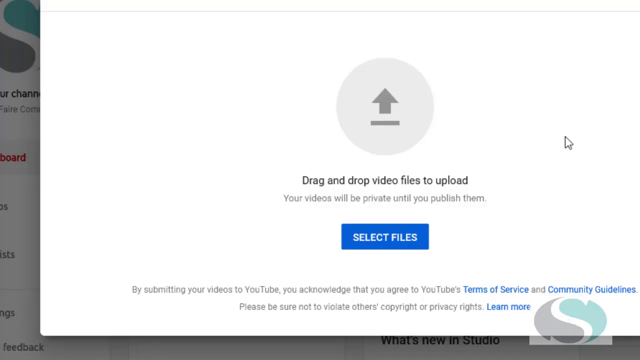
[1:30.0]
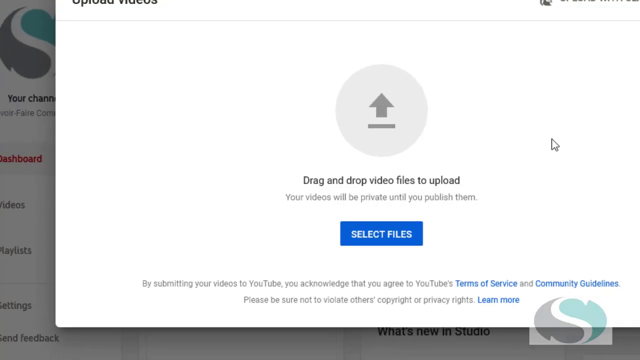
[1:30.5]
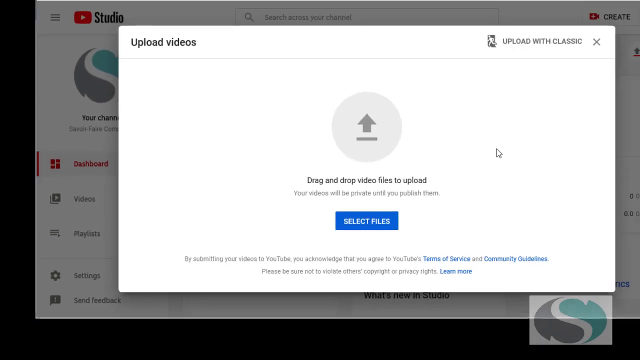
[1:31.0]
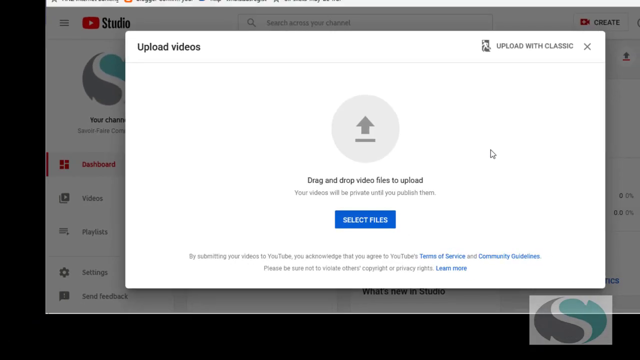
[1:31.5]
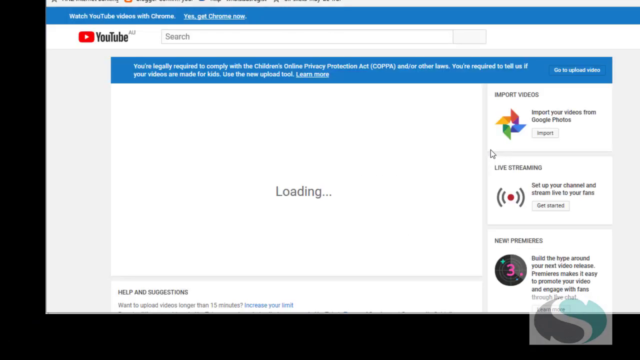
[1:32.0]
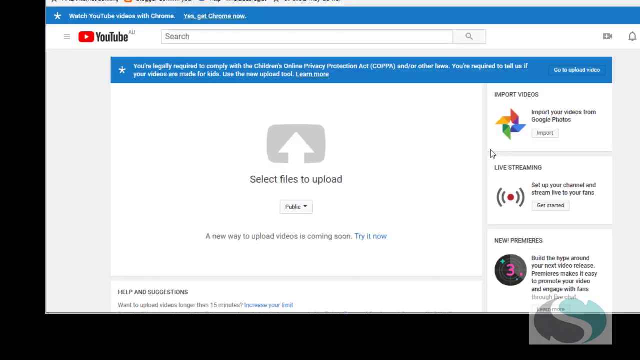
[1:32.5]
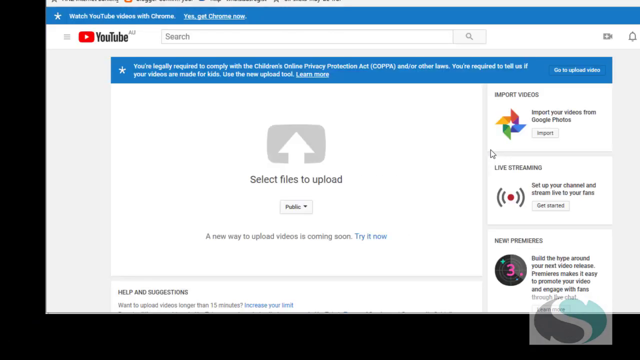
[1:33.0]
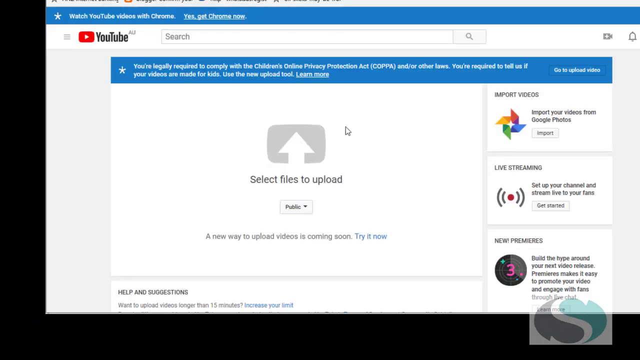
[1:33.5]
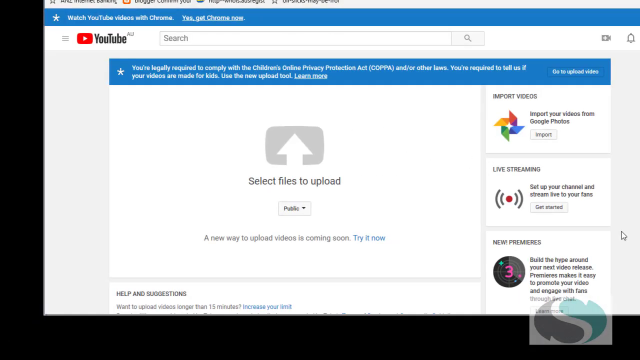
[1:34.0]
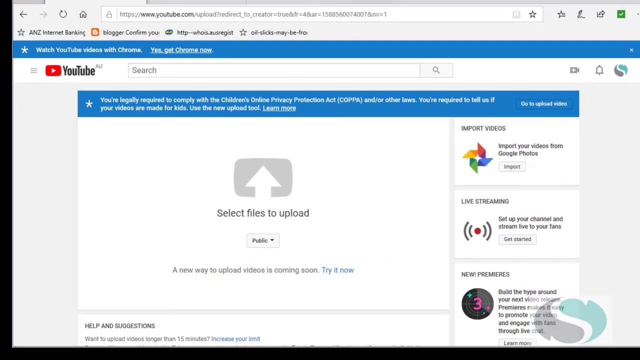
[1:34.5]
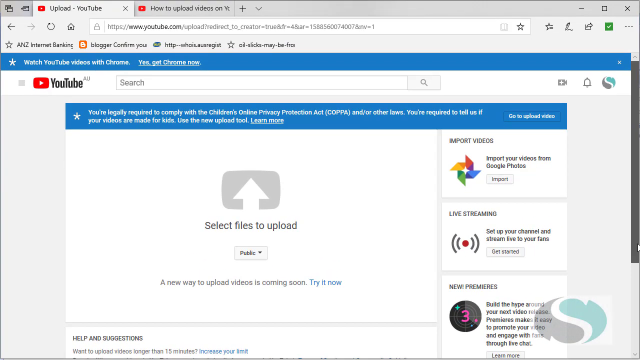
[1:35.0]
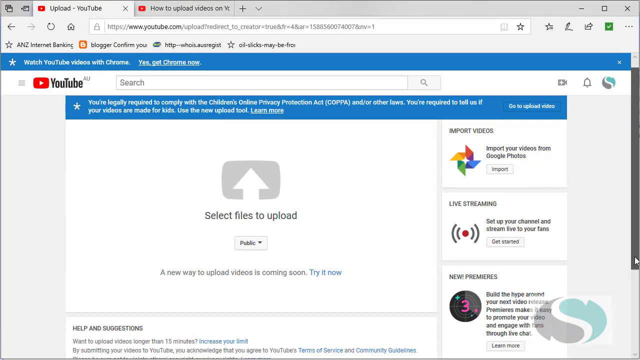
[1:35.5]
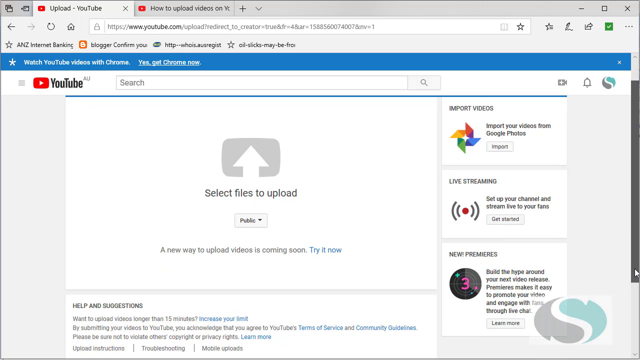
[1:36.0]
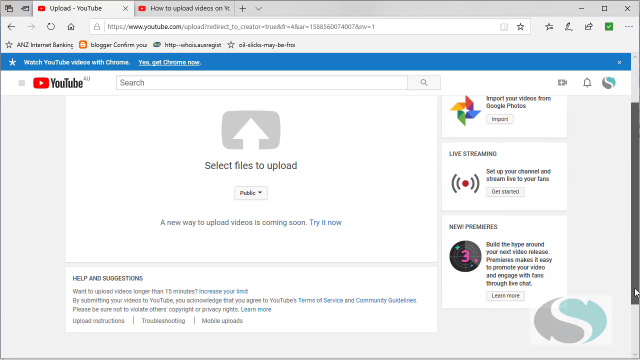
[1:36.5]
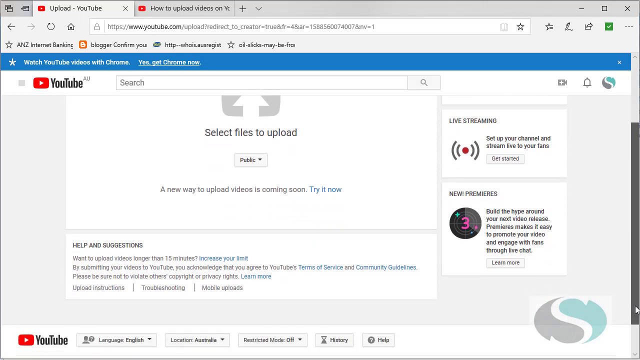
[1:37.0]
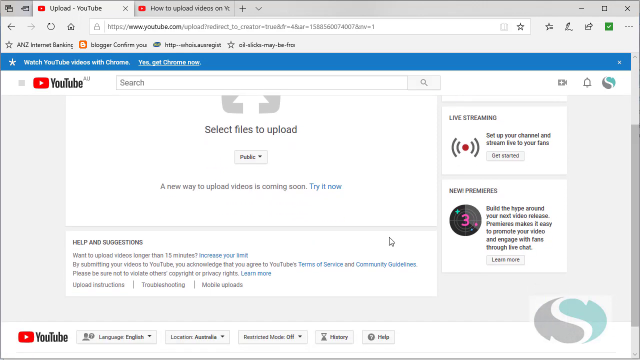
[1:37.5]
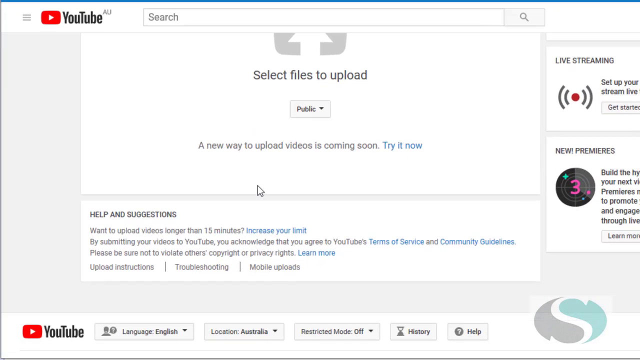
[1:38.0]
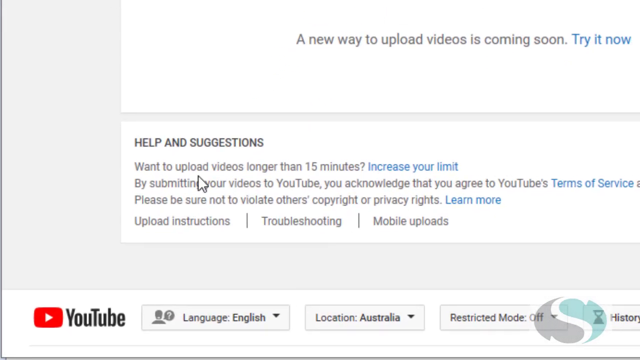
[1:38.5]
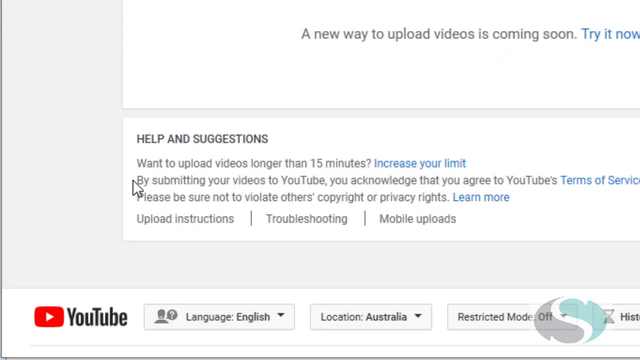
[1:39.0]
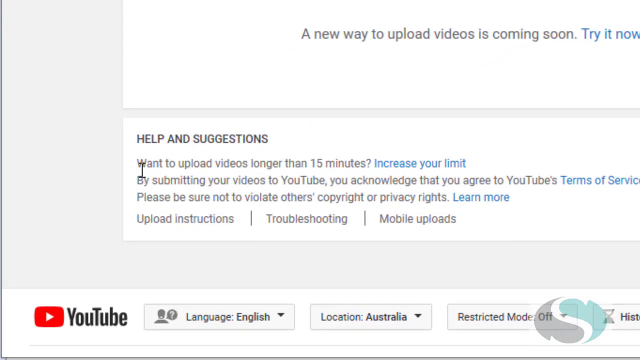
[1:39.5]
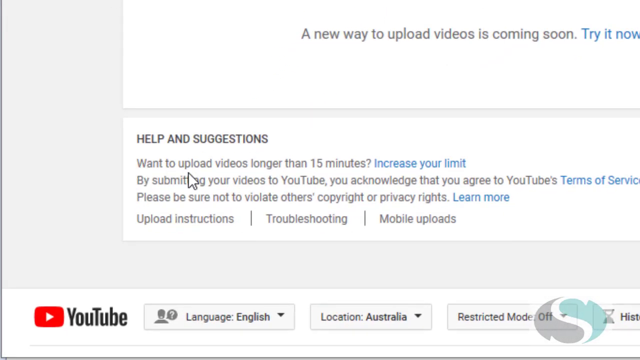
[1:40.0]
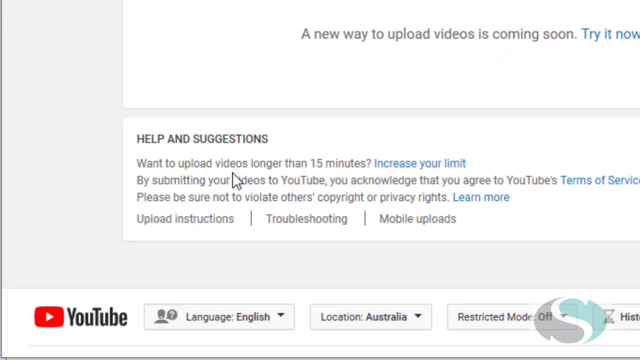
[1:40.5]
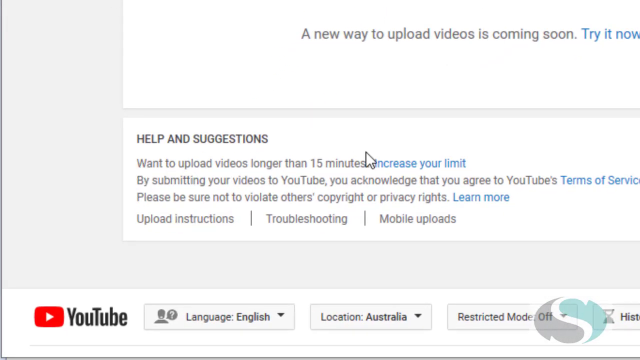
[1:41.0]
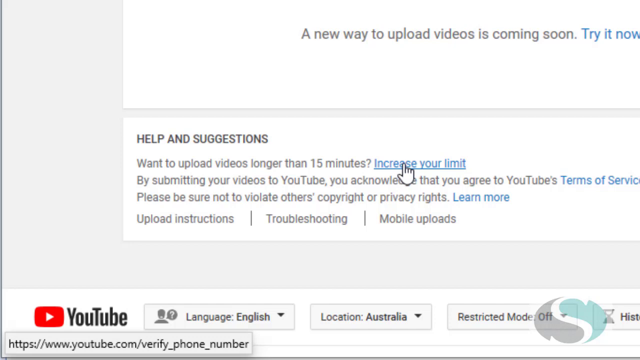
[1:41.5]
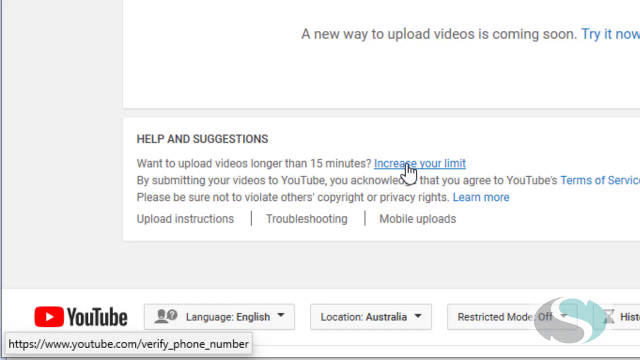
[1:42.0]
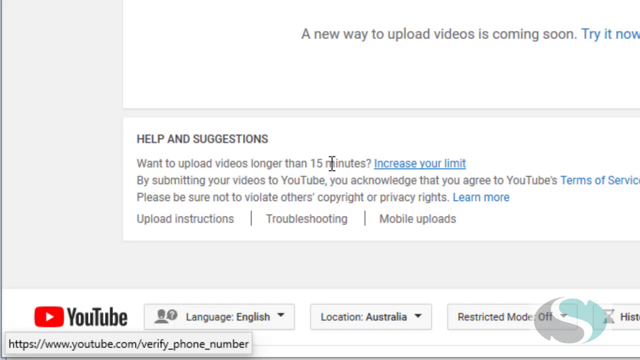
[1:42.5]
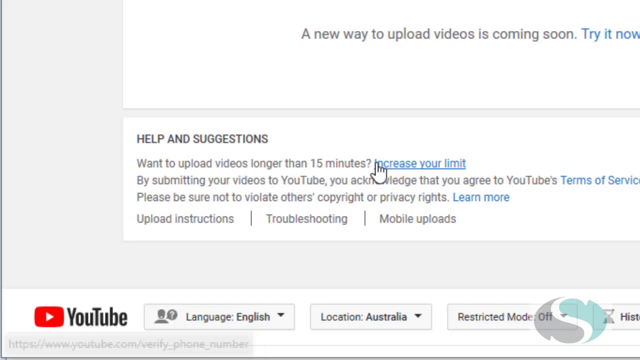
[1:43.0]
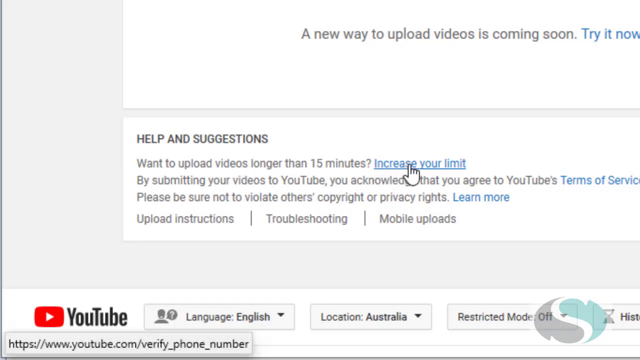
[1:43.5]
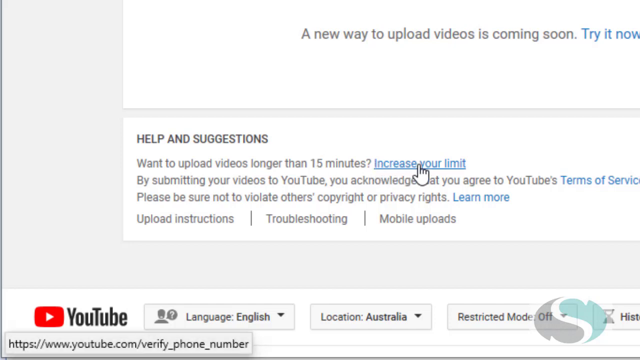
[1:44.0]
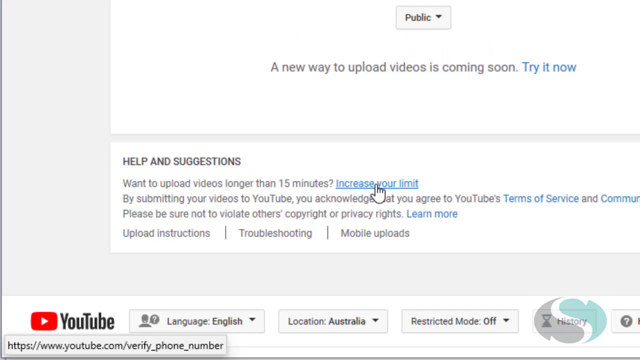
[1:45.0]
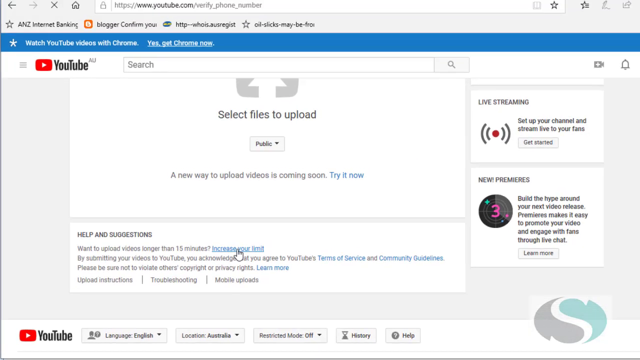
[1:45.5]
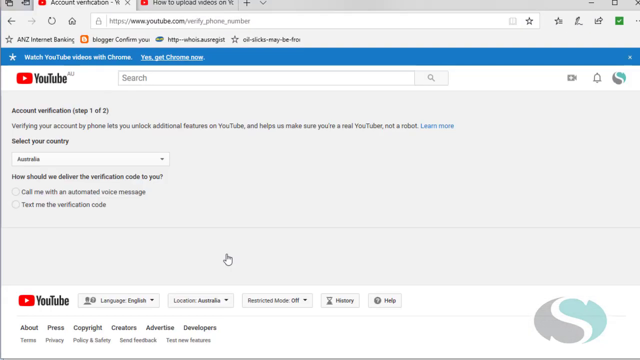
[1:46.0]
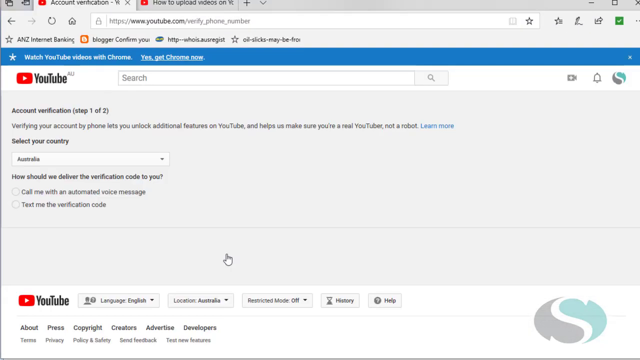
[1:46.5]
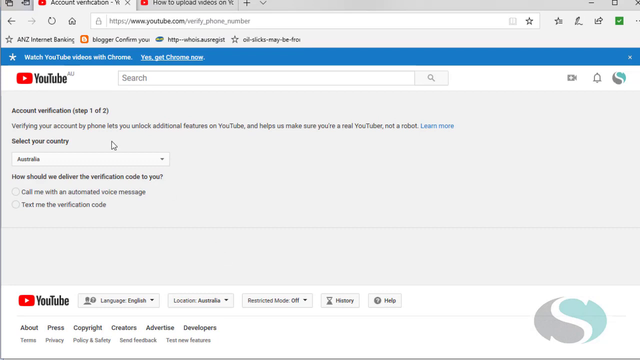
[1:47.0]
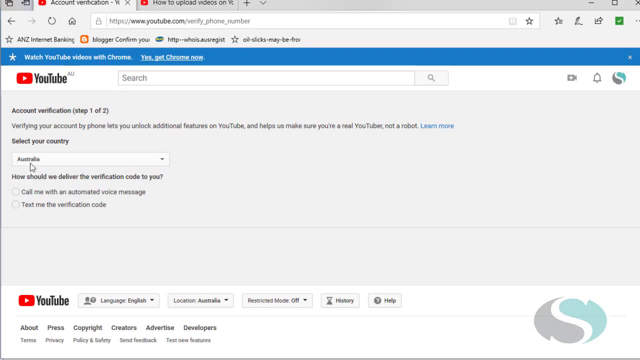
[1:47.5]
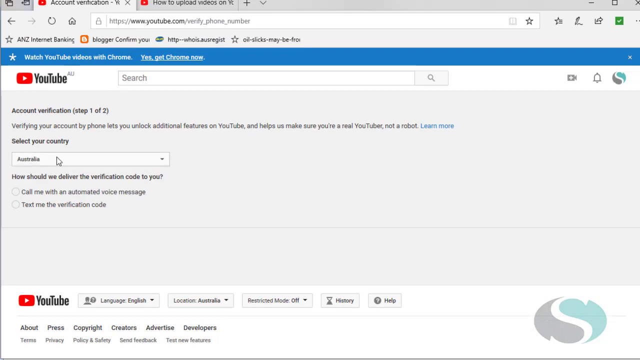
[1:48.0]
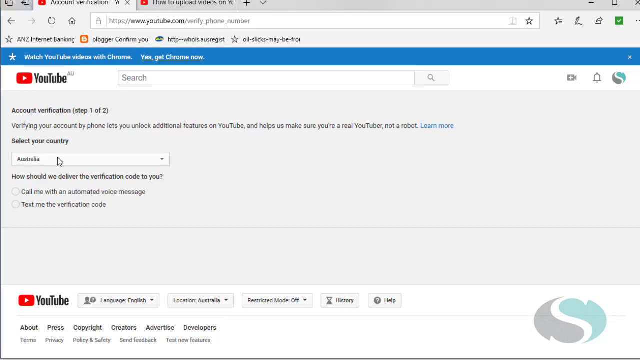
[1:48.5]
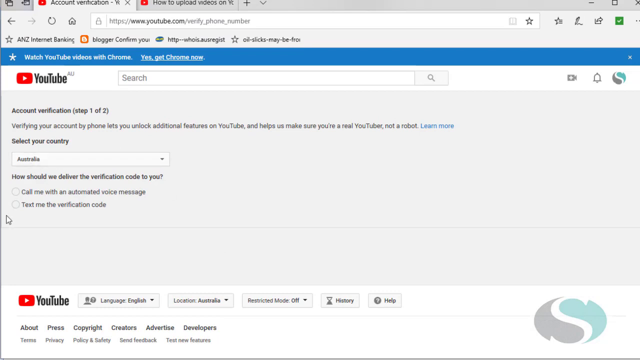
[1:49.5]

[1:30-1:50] The view shows the area for selecting files to drag and drop or upload a video to the YouTube channel. Beneath "select files" is a small paragraph reading "by submitting your videos to YouTube, you acknowledge that you agree to YouTube's terms of service and community guidelines," with "terms of service" and "community guidelines" highlighted in blue, possibly clickable. Below that it reads "please be sure not to violate others' copyright or privacy rights," followed by a learn more section. The screen pans out and goes over to the select files area, and the user drags the scroll bar down to a section reading "help and suggestions" and "want to upload videos longer than 15 minutes," where an increase limit icon is available. Selecting it brings up account verification, which reads "verify the account" and "select your country," with a few other fields for entering data. The user selects Australia as the country, and the page asks whether they want their limit increased, which requires verification.